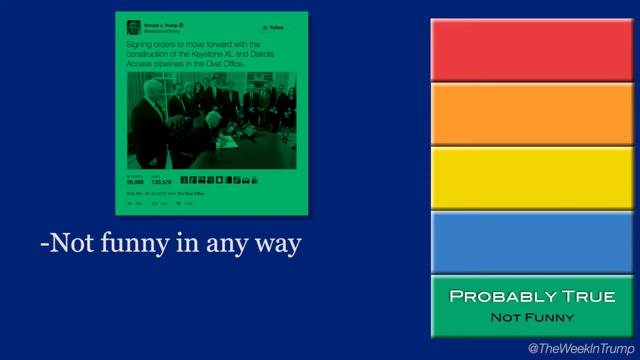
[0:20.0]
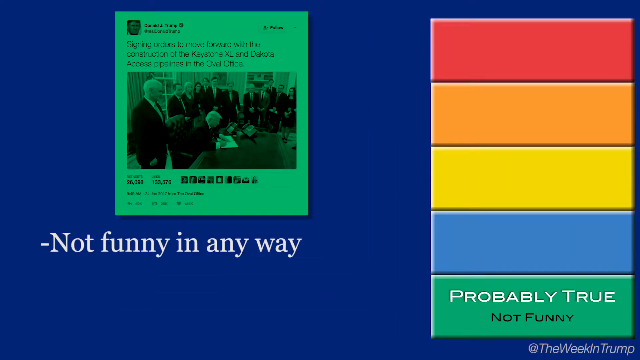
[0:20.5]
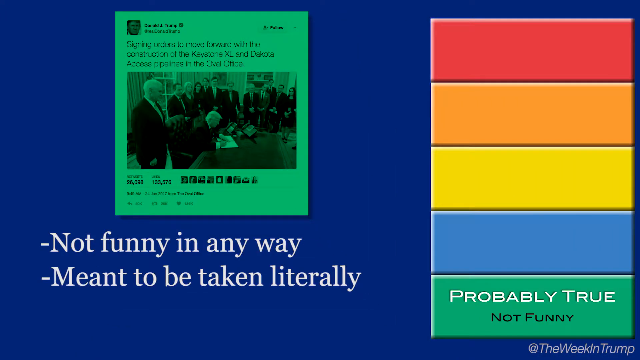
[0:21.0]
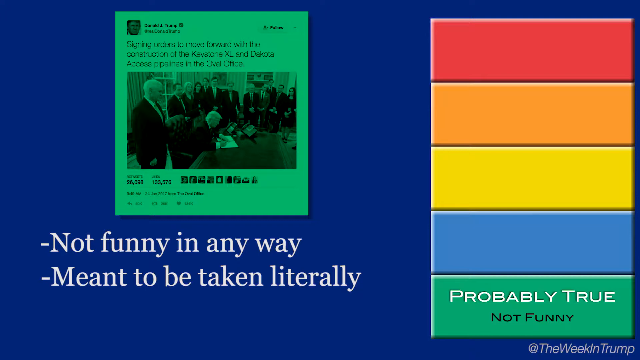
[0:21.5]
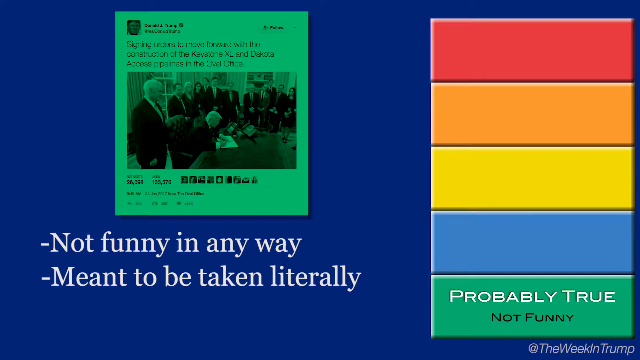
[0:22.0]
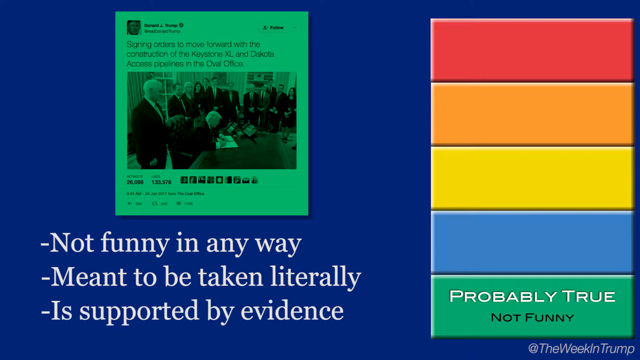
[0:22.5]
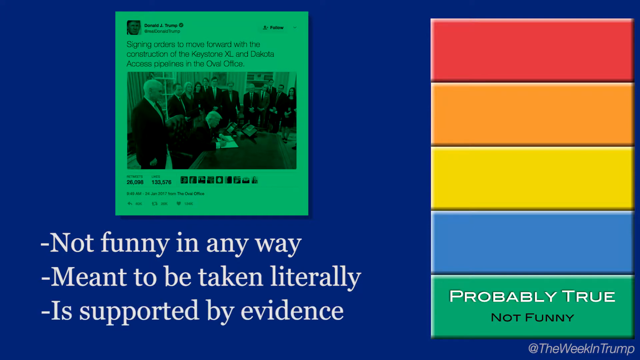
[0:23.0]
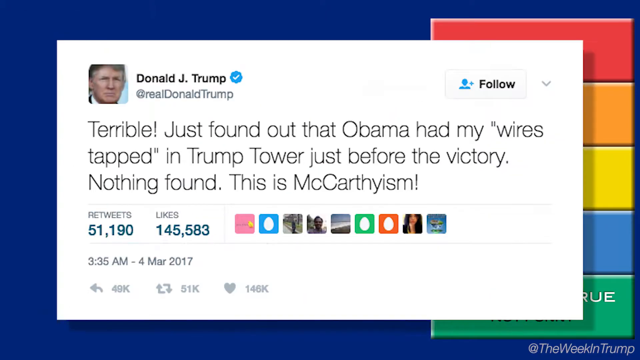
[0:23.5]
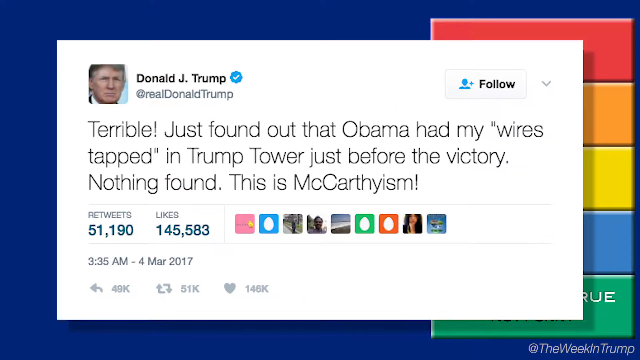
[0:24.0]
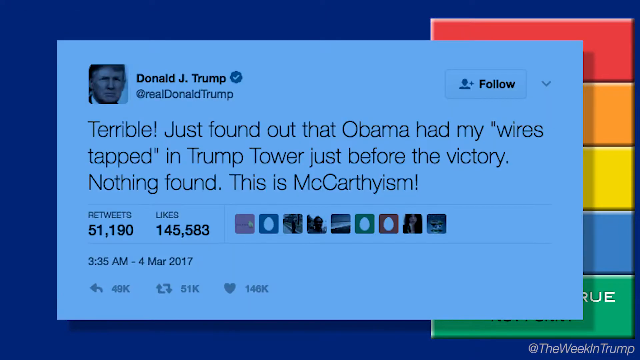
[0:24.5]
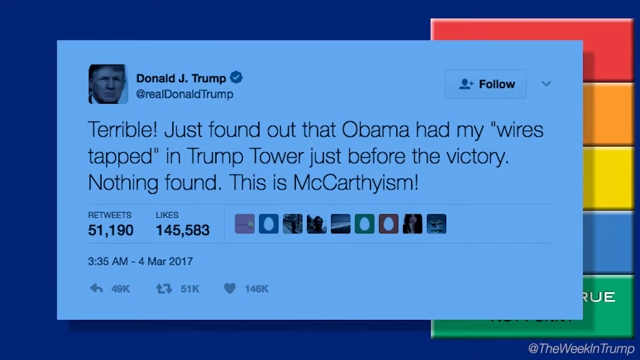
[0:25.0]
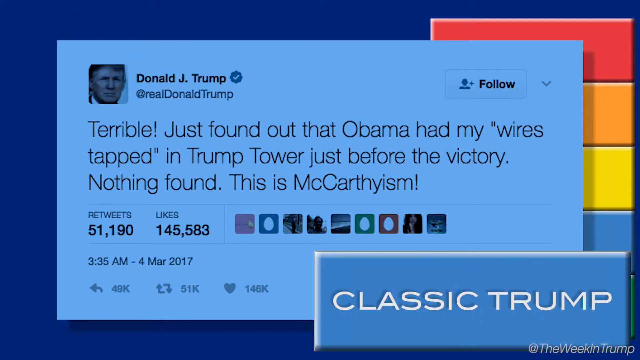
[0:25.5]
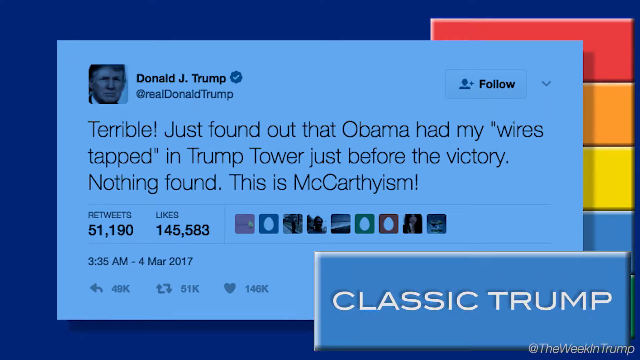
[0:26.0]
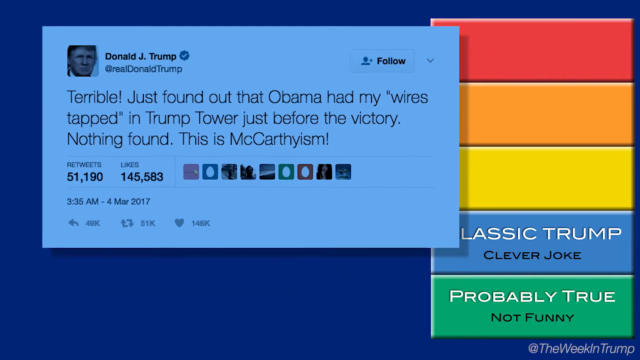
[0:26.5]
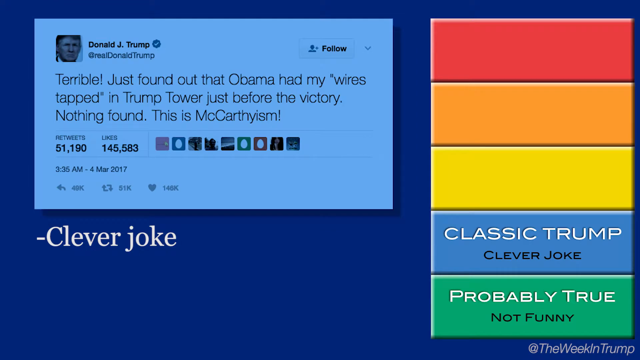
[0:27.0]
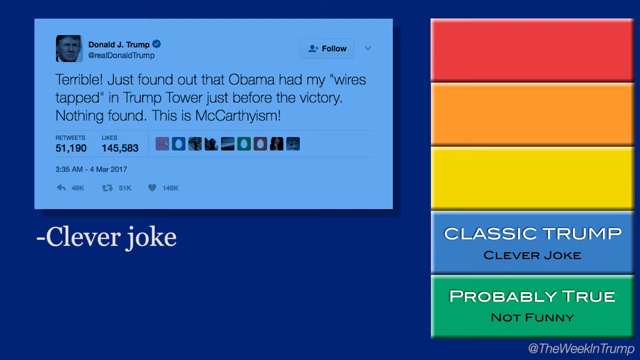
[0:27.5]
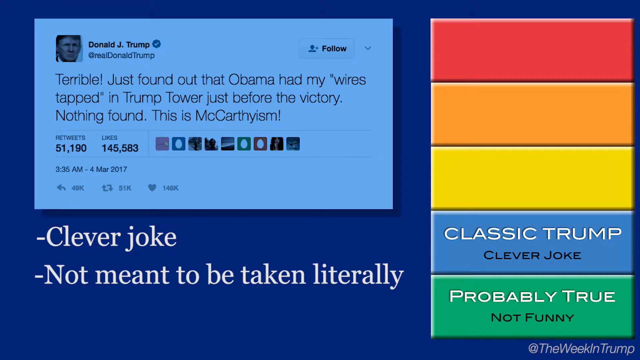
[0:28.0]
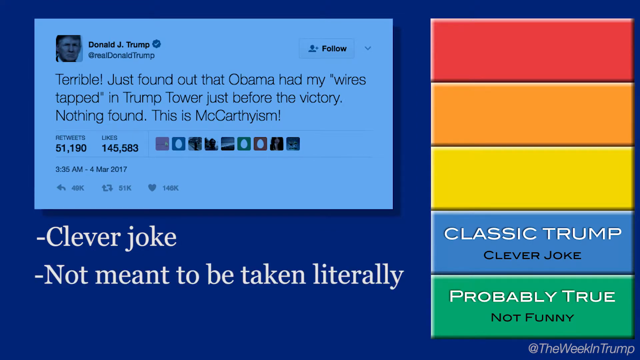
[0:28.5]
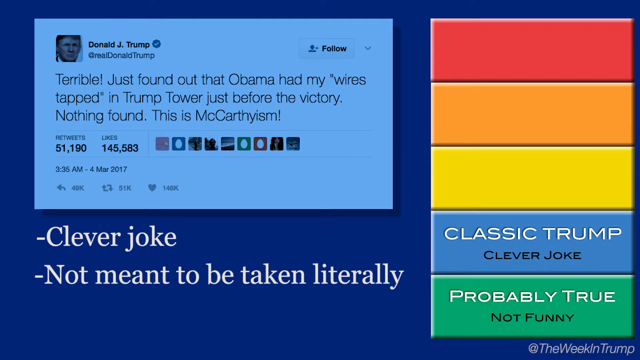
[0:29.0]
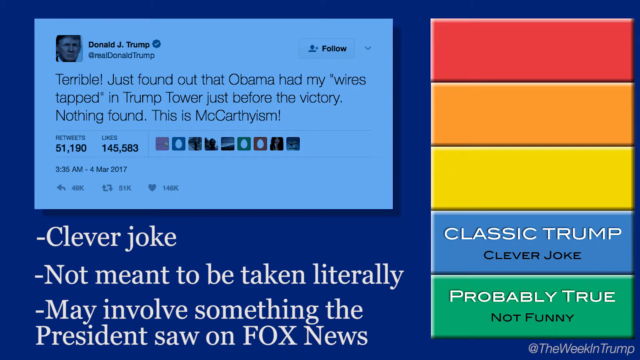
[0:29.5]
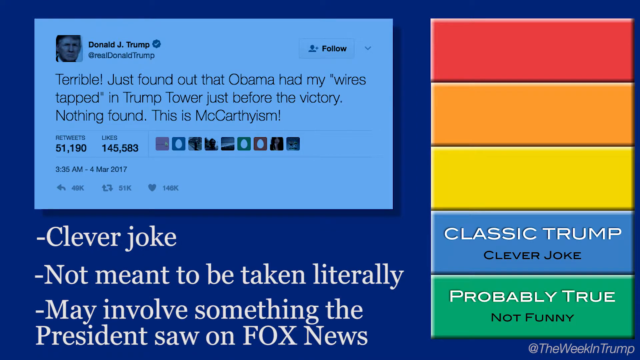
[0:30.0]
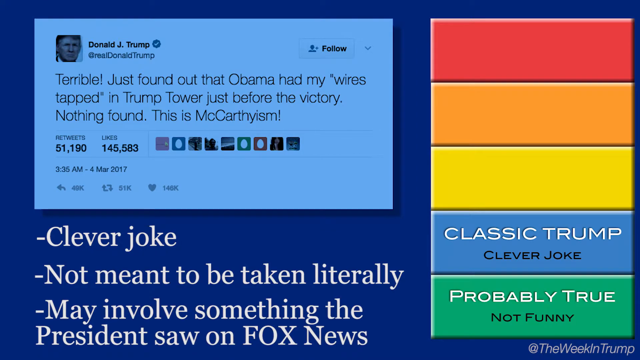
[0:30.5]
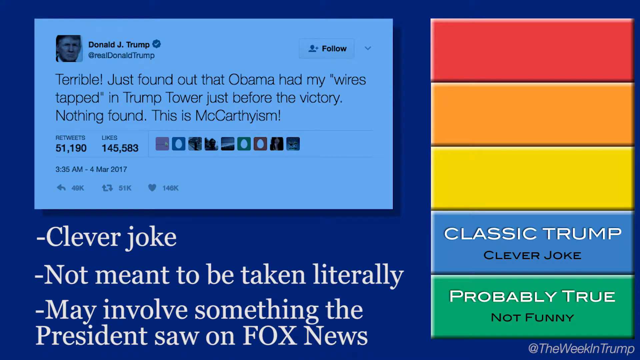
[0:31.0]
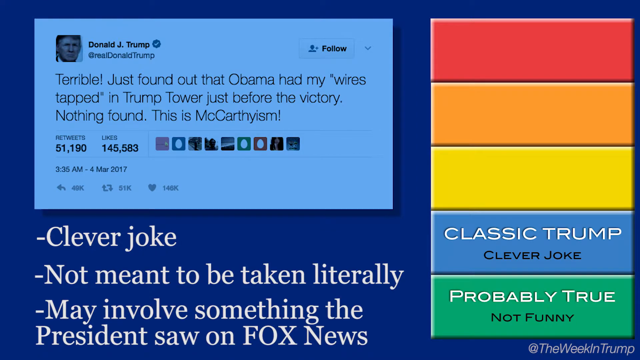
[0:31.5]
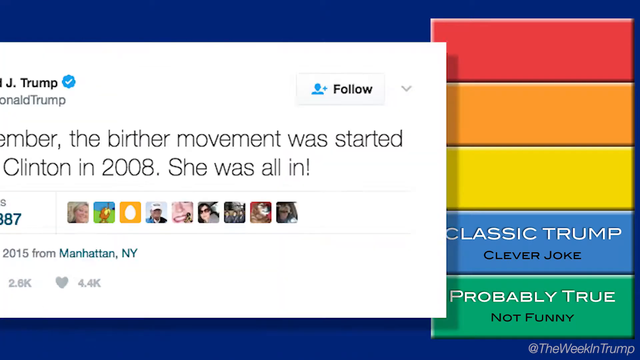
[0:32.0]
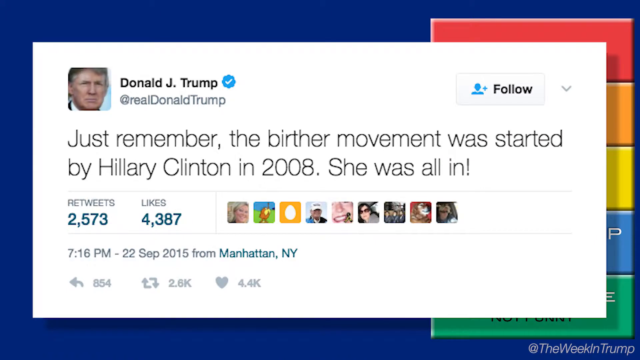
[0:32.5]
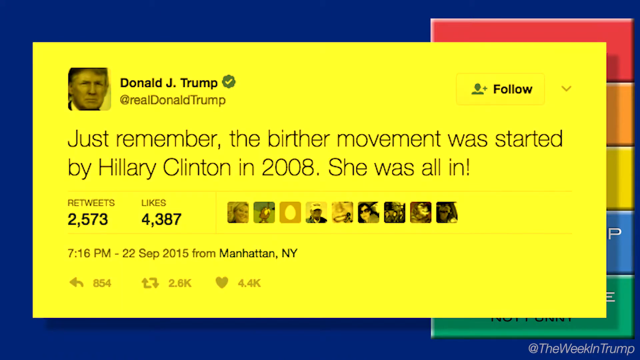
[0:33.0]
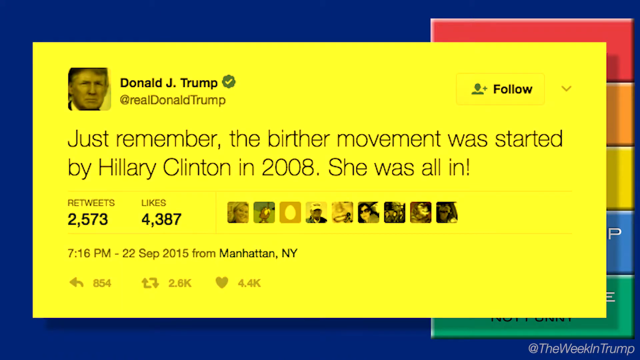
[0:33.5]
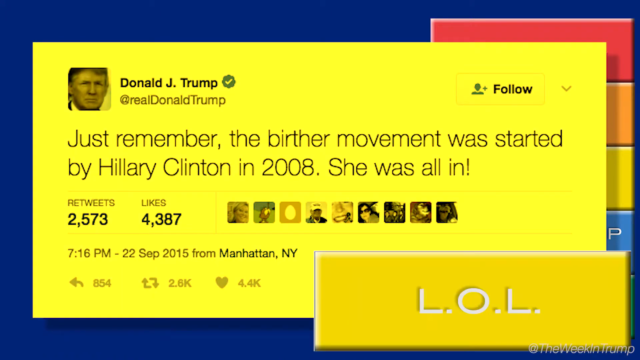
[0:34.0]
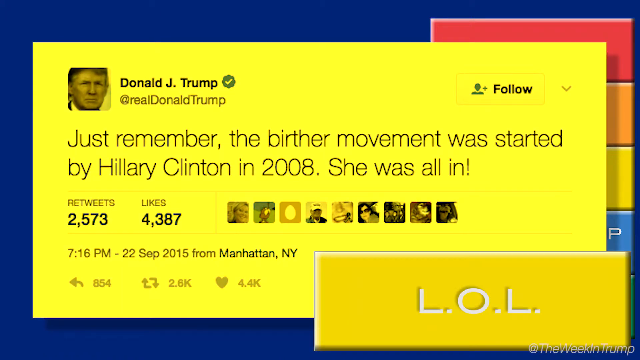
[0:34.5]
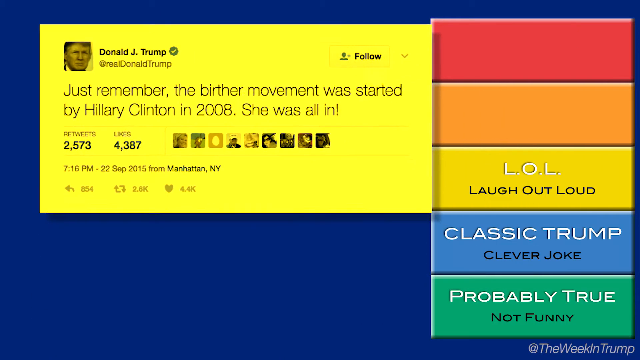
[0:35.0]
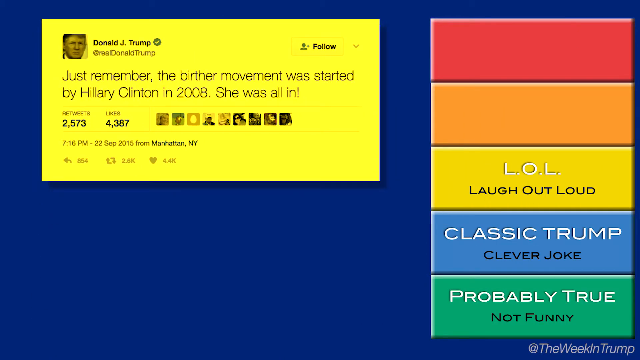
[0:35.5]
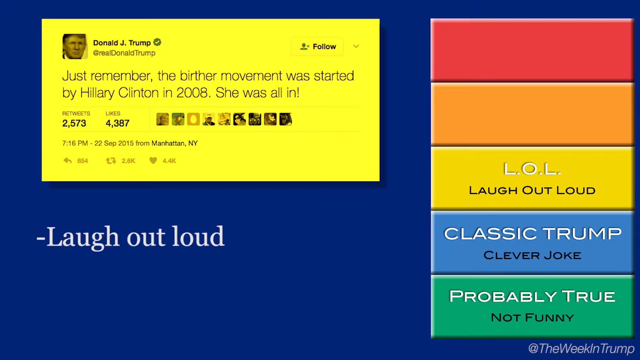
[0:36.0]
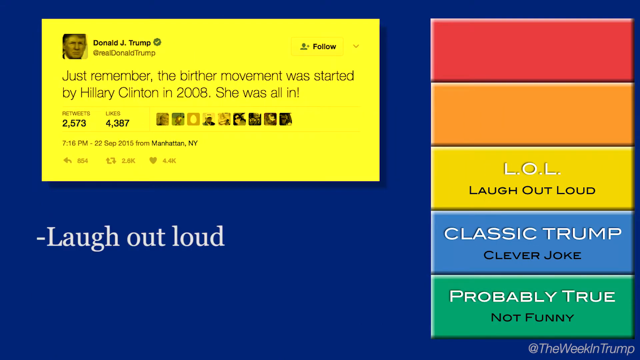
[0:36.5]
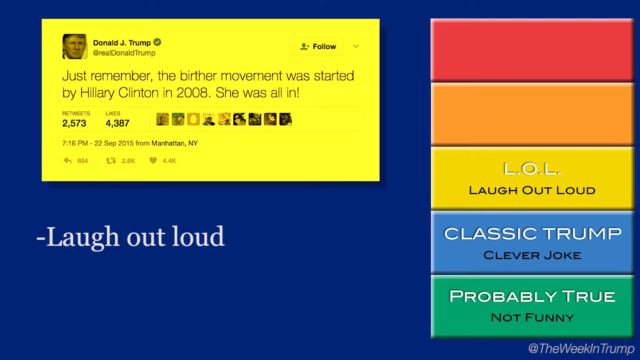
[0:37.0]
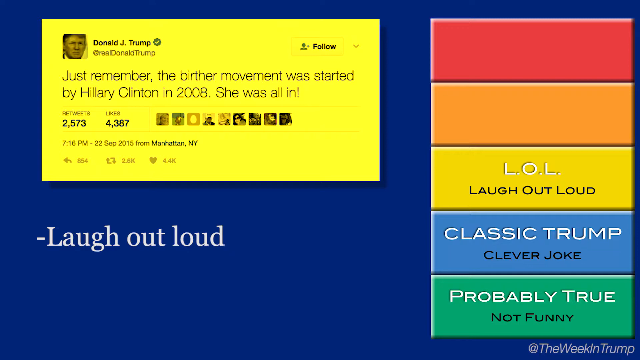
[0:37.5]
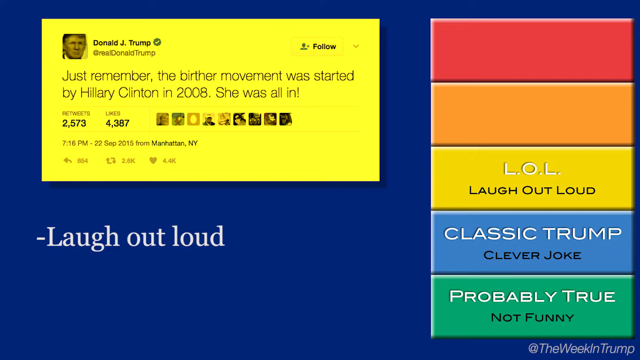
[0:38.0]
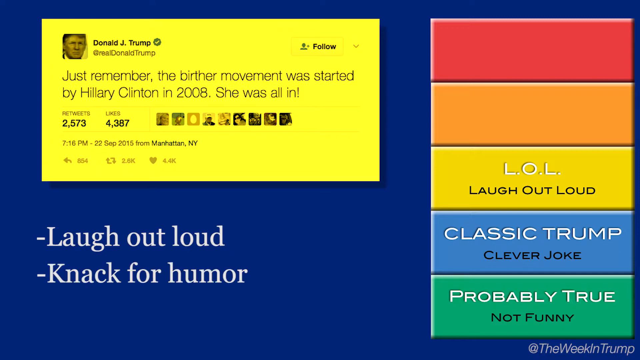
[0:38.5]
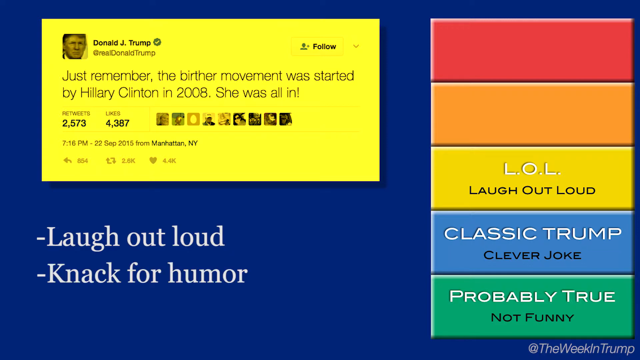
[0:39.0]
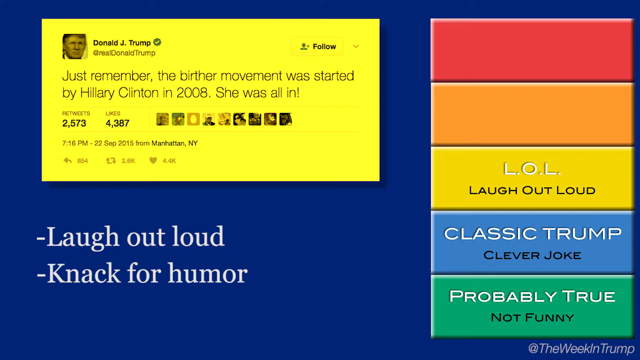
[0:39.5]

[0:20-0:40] The larger Twitter post remains on screen, and underneath it text reads "not funny in any way, meant to be taken literally, is supported by evidence." Another Twitter post from Donald Trump appears, reading "terrible just found out about that Obama had my wires tapped in Trump Tower just before the victory" and "this is McCarthyism." At the bottom right a label says "Classic Trump," with text below describing it as a clever joke not meant to be taken literally; further text mentions Fox News, but the rest of it cannot be seen. Next comes a Twitter post in yellow that says "just remember the birther movement was started by Hillary Clinton in 2008. She was all in." At its bottom right a label says "LOL," with text reading "laugh out loud, knack for humor, well thought out."